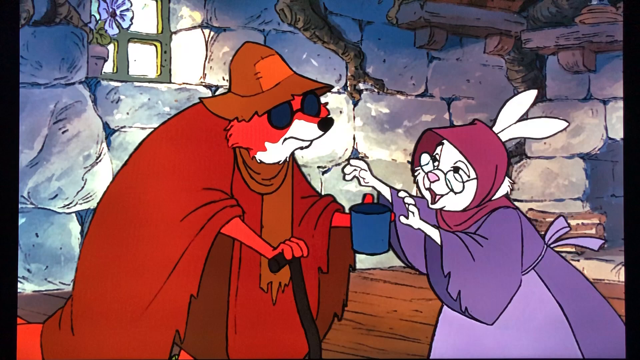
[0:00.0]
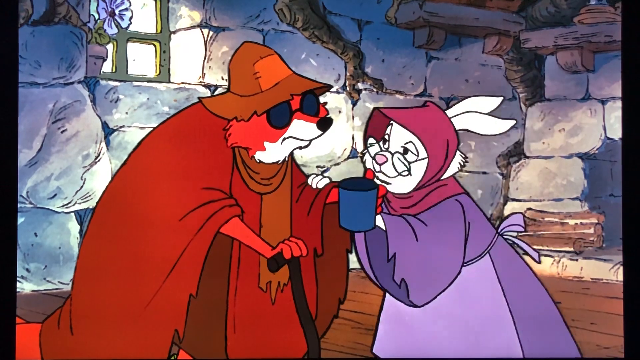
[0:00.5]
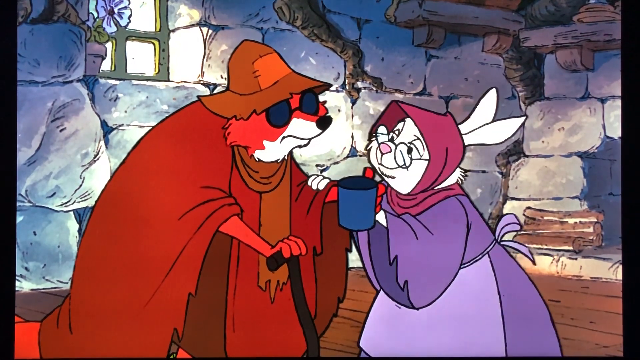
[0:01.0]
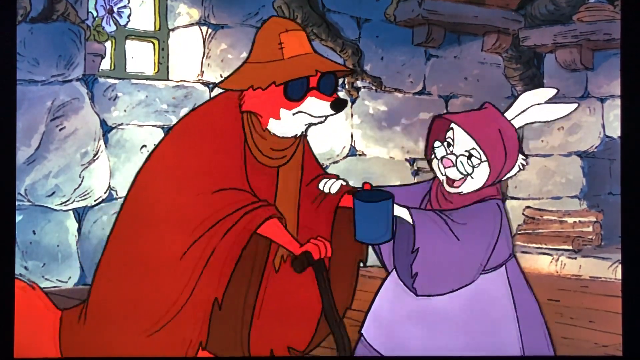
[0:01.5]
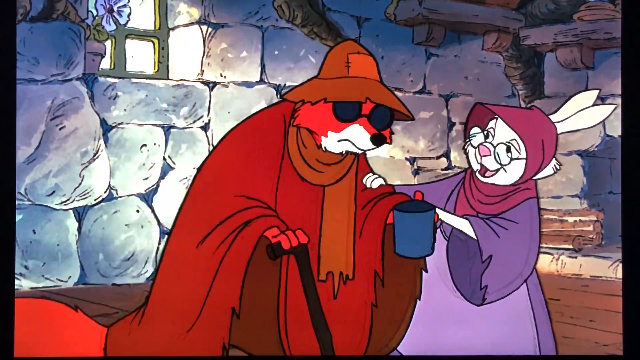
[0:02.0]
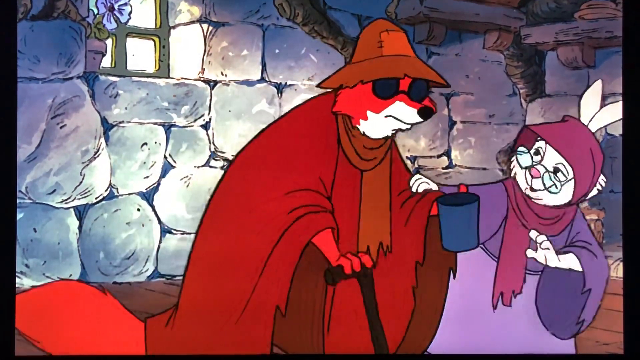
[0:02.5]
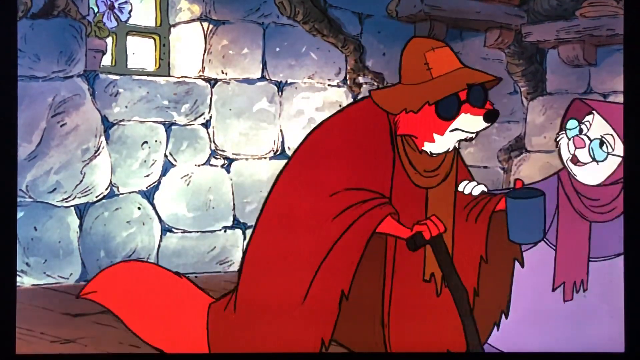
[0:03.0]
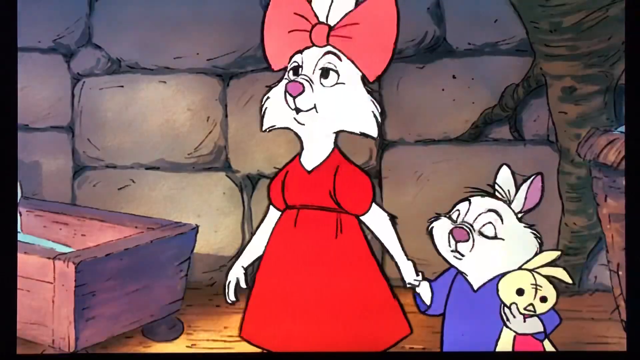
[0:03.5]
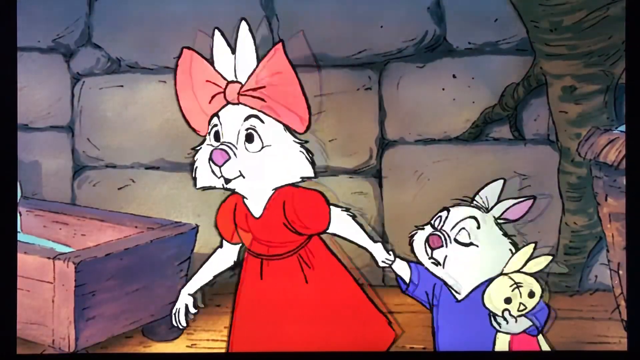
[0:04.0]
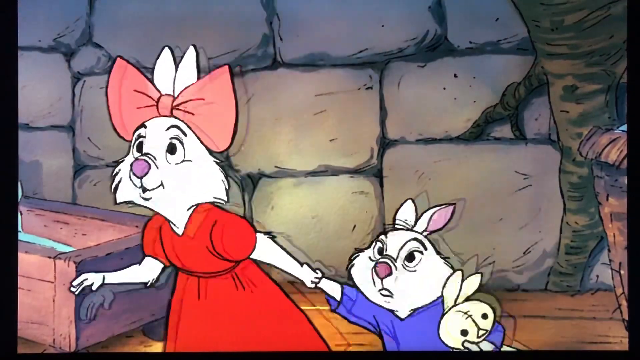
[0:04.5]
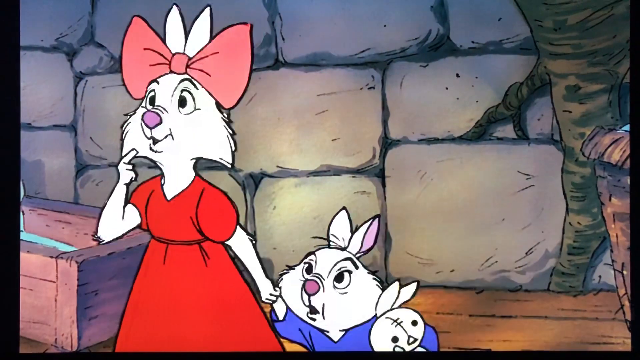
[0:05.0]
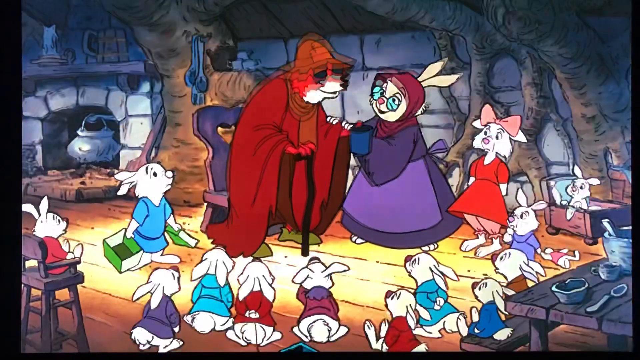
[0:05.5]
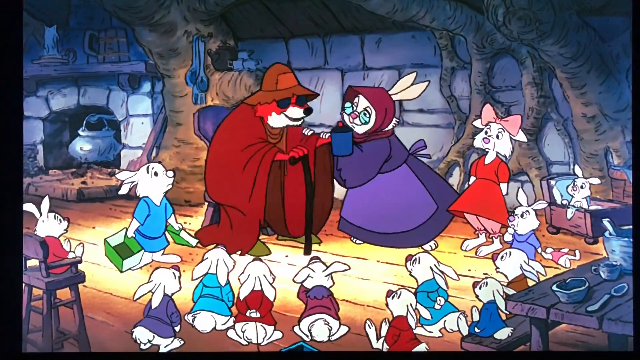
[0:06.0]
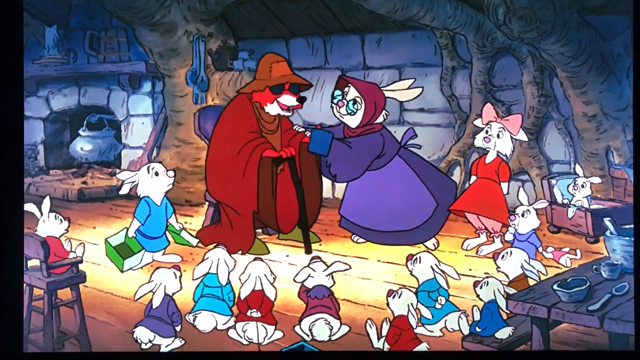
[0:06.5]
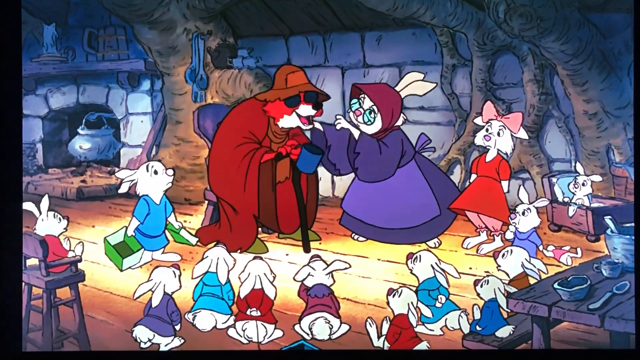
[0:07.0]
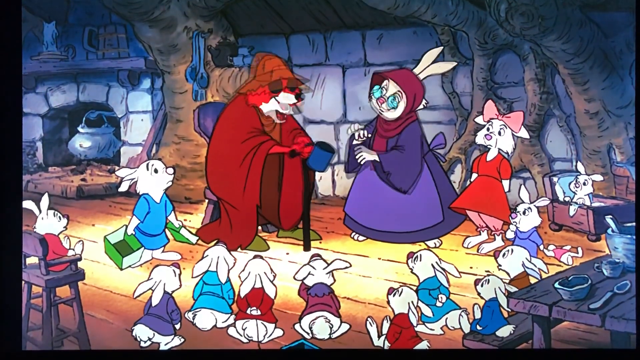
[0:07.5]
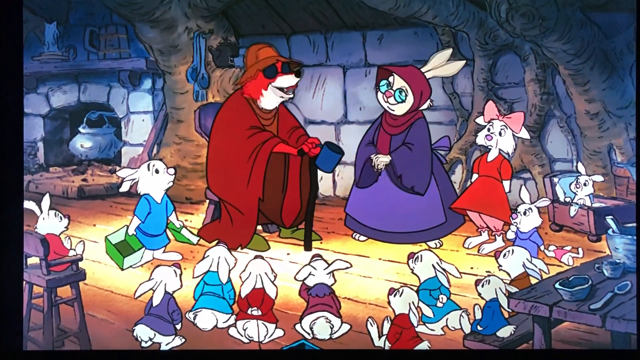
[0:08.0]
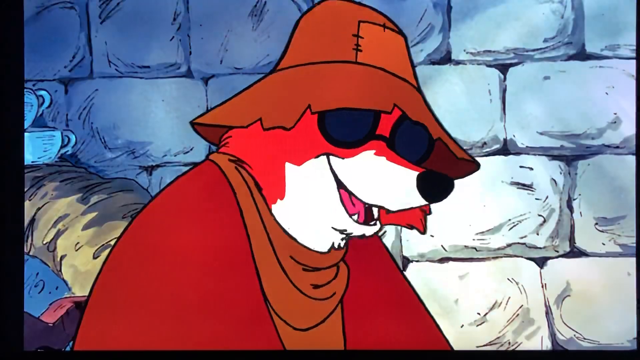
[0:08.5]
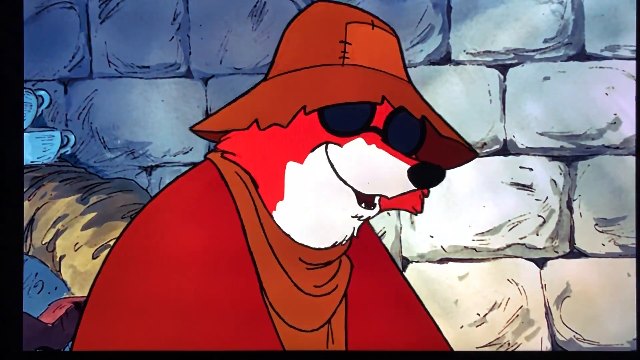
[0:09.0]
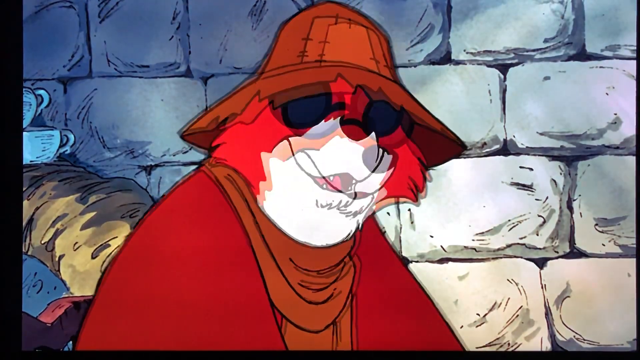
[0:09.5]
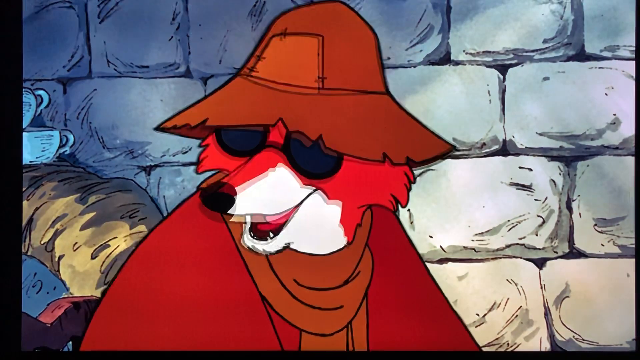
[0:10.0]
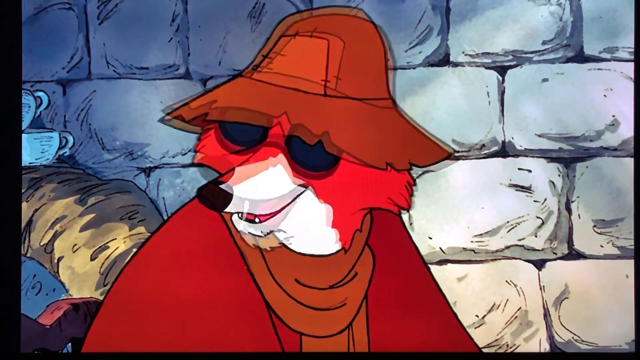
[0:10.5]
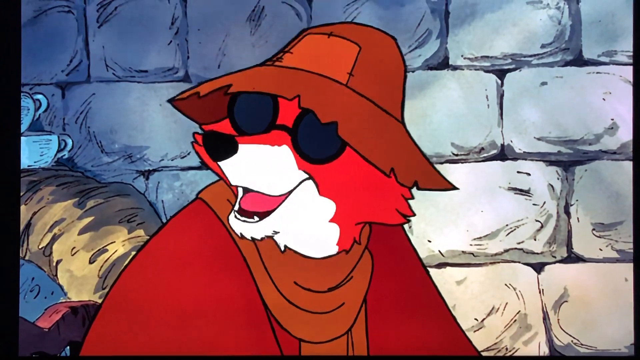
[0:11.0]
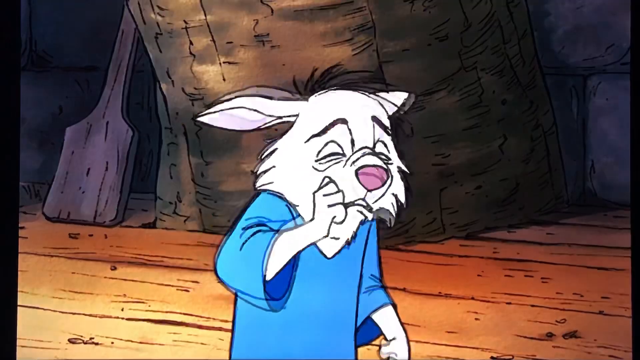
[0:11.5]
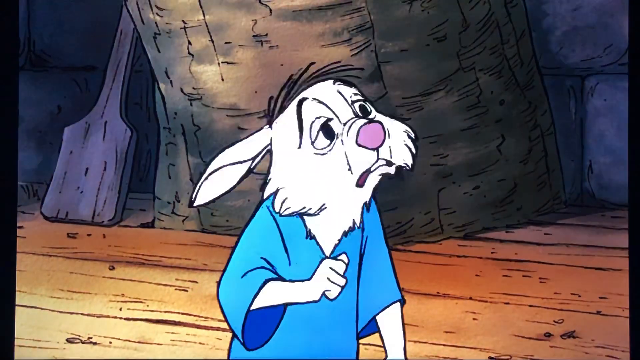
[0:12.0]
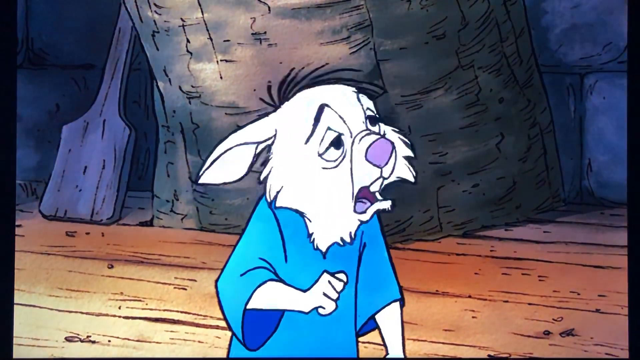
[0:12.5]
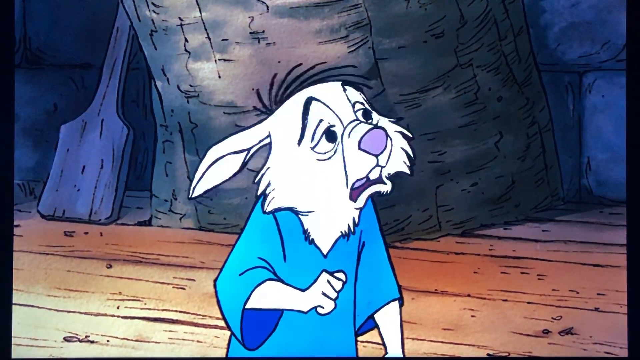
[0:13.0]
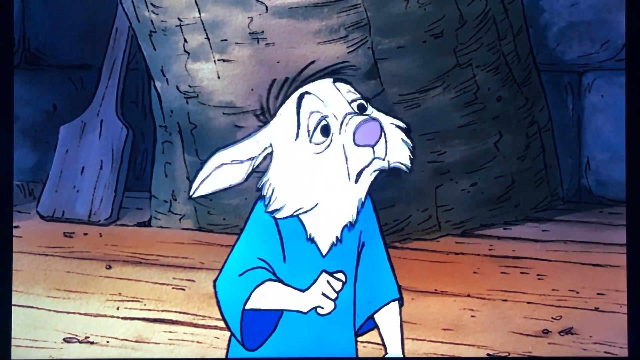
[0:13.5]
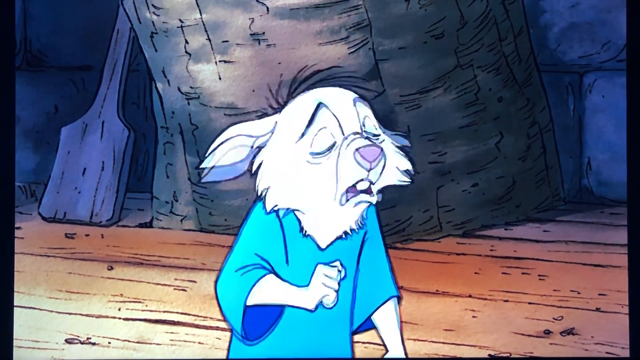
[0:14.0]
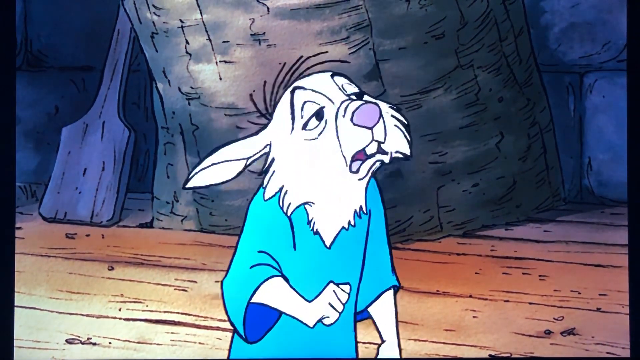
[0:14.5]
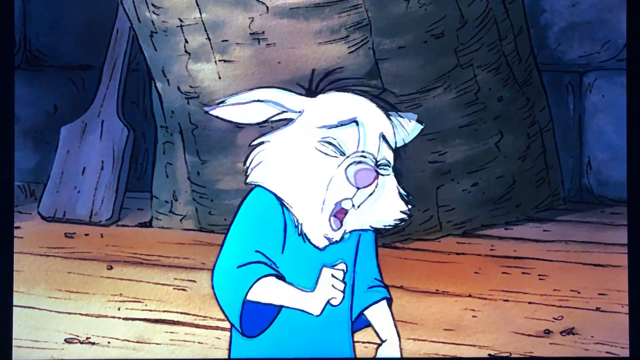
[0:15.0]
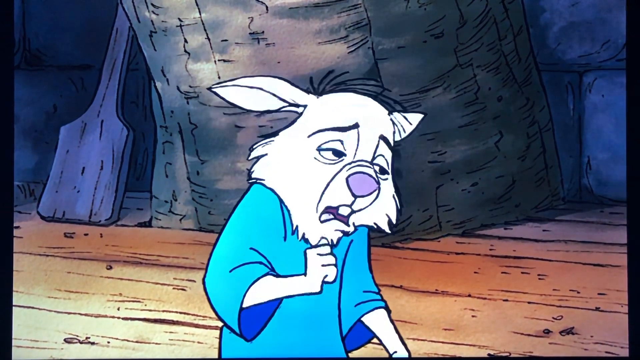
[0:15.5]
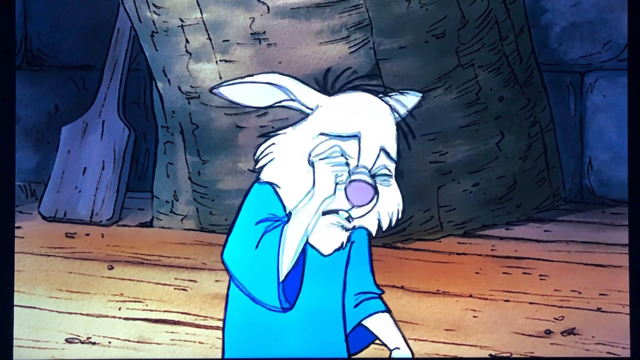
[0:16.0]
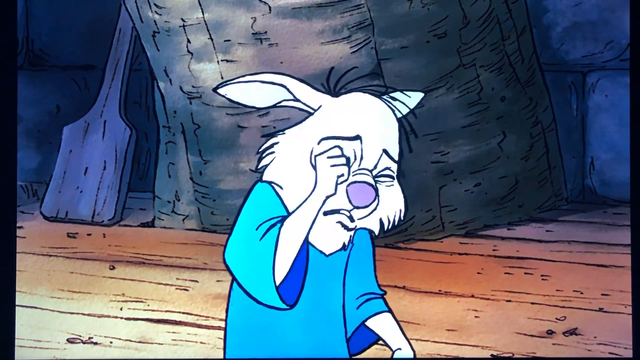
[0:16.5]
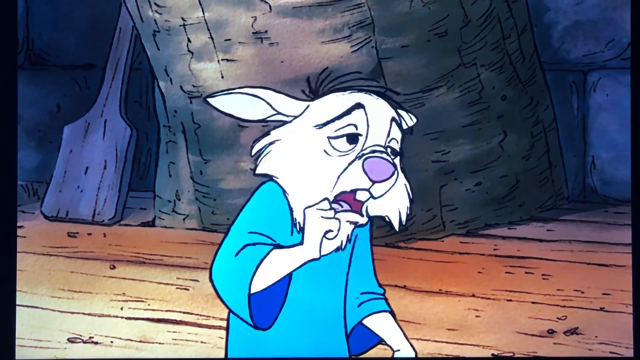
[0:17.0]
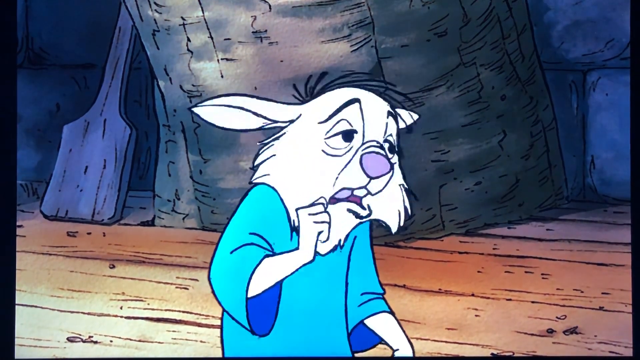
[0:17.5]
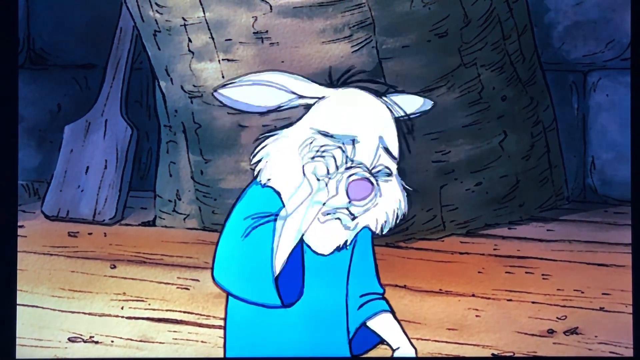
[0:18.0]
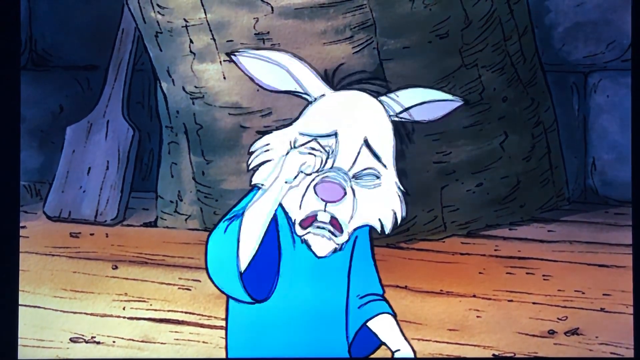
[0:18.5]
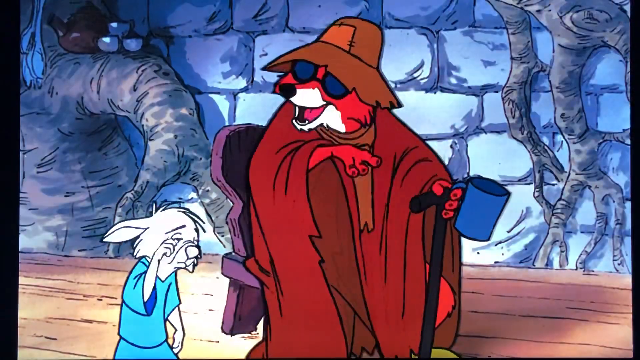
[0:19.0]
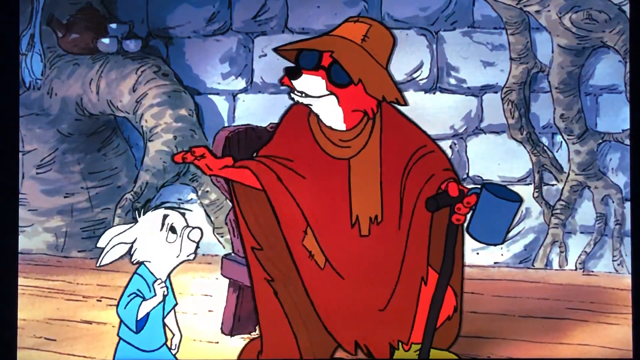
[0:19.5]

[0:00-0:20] A fox who appears poor and homeless has been taken in by a rabbit family. The rabbit mother has settled him in a chair, and he is surrounded by the rabbit children. One of them is very upset; he goes up to the fox, rubbing his eyes and crying. The fox looks compassionate, talks to him, and pats him on the head. The fox seems to be putting on a poor appearance, sitting in the chair and talking kindly with the whole family. The cartoon style looks like 1960s-era Disney.